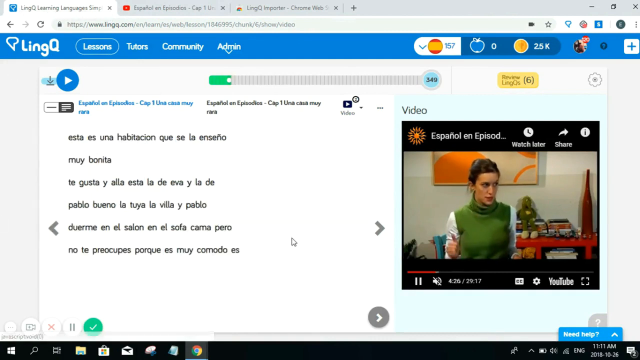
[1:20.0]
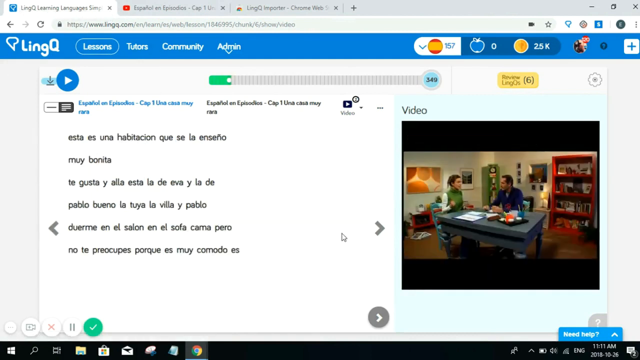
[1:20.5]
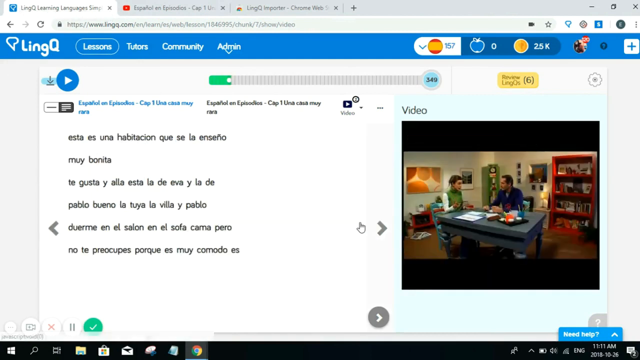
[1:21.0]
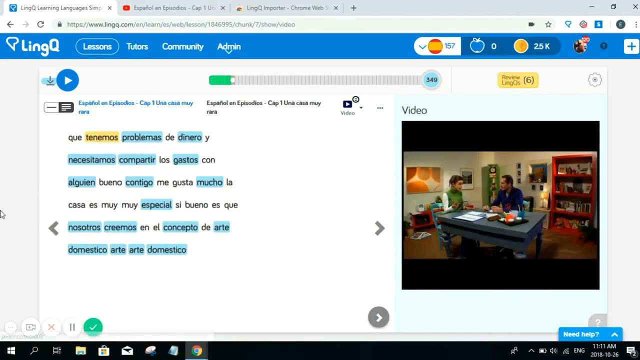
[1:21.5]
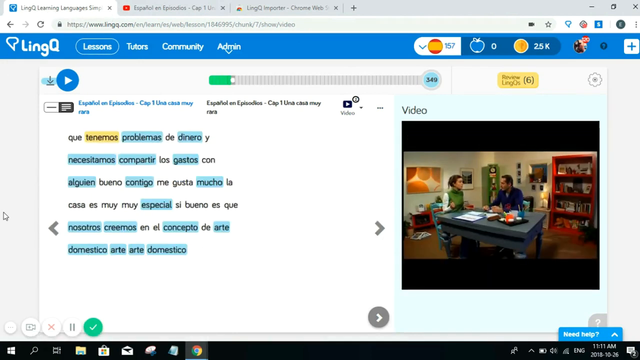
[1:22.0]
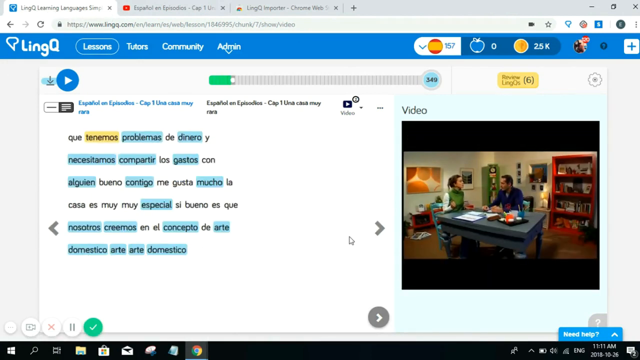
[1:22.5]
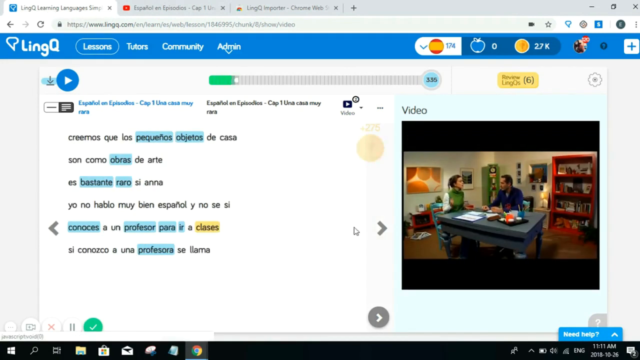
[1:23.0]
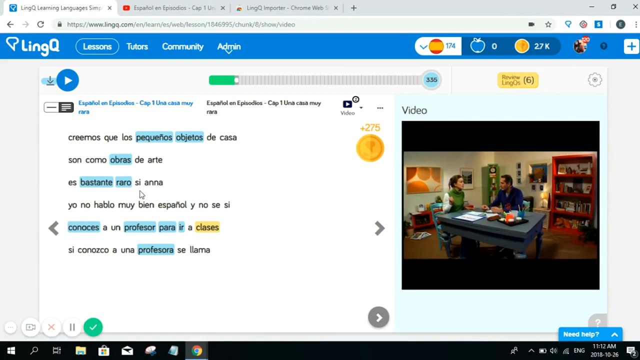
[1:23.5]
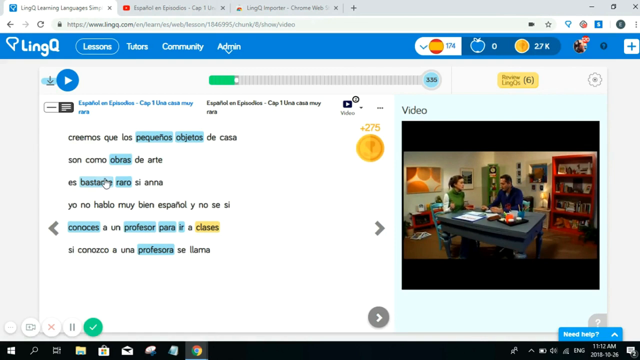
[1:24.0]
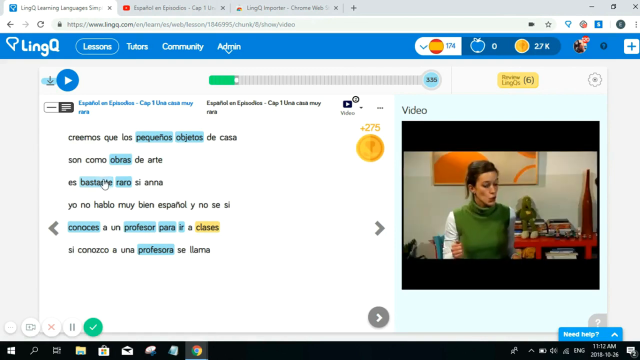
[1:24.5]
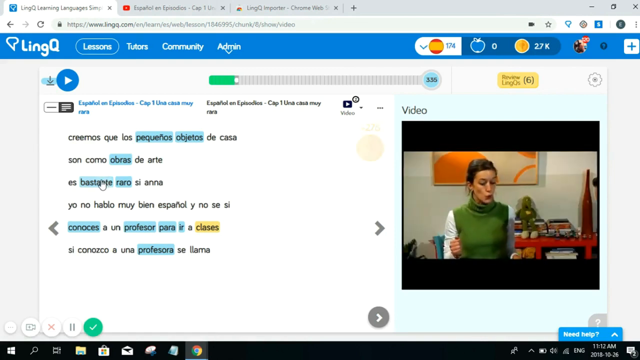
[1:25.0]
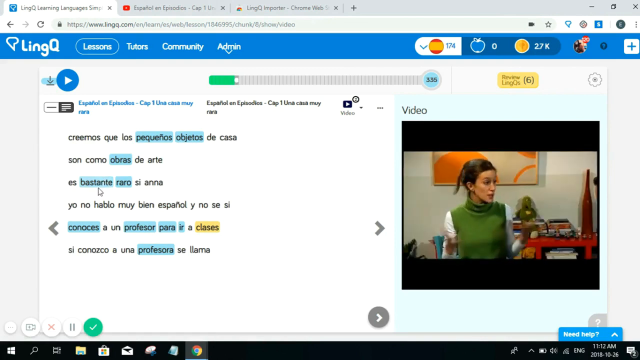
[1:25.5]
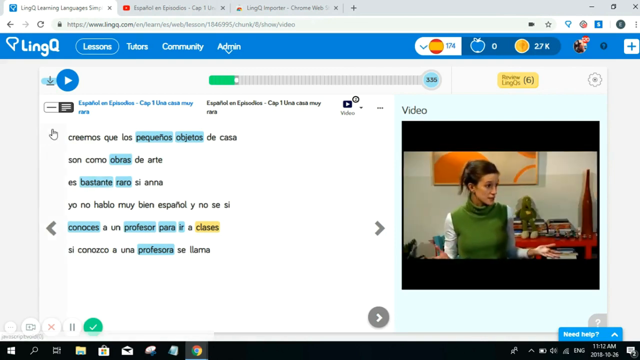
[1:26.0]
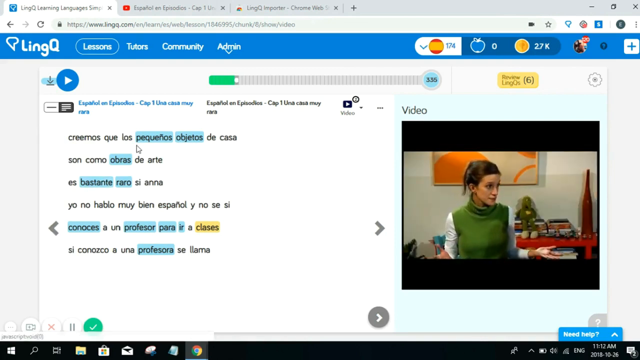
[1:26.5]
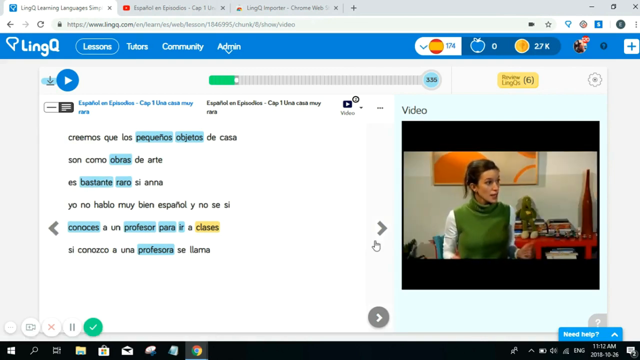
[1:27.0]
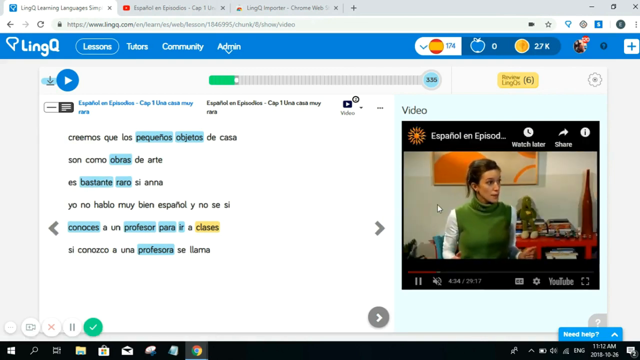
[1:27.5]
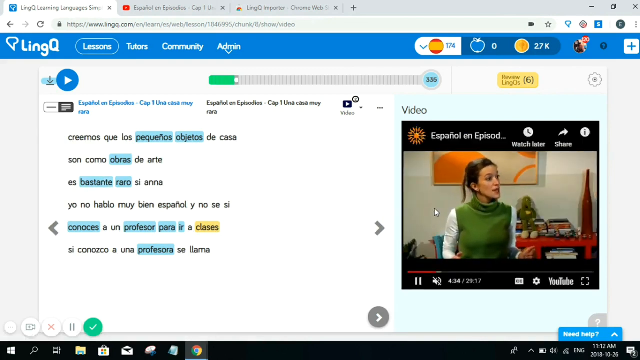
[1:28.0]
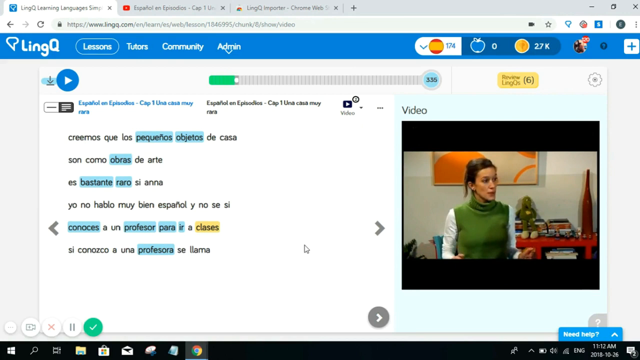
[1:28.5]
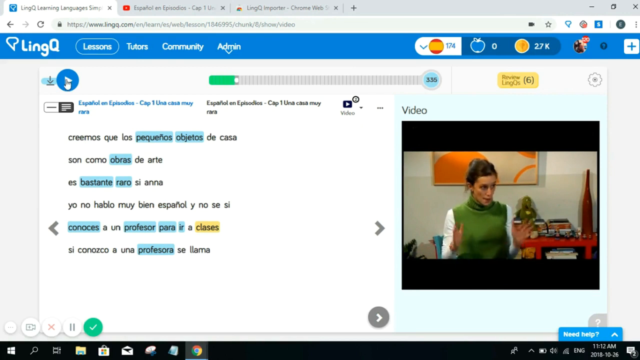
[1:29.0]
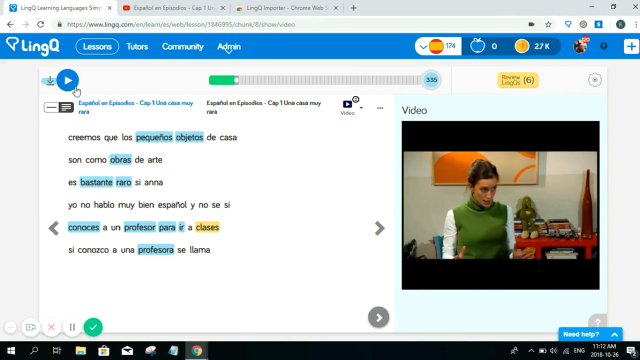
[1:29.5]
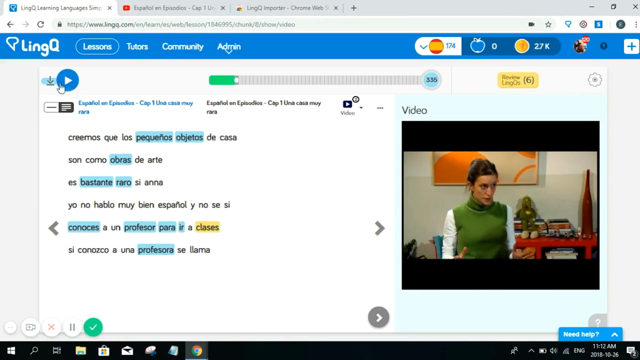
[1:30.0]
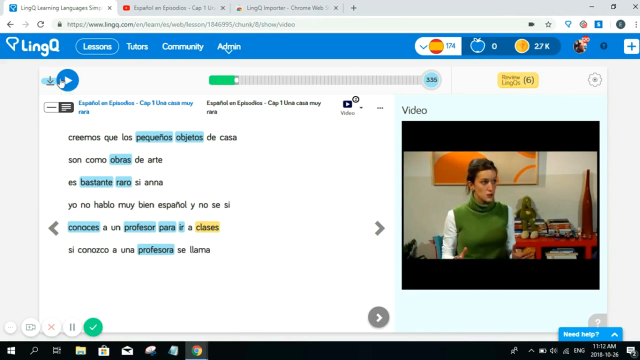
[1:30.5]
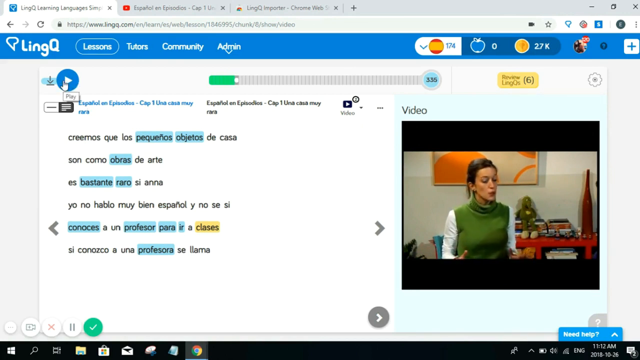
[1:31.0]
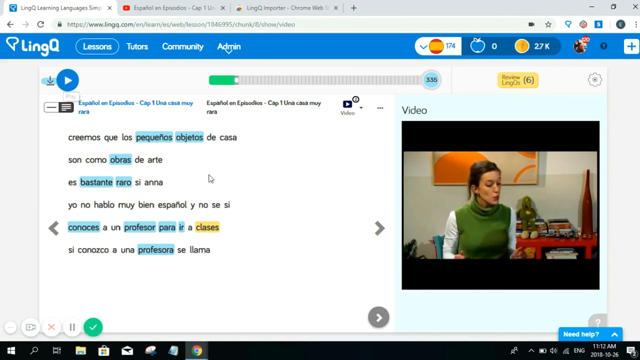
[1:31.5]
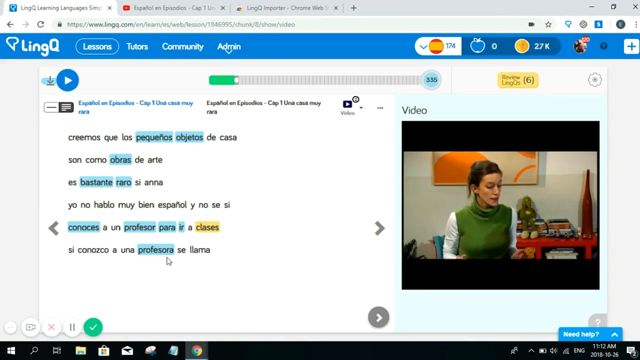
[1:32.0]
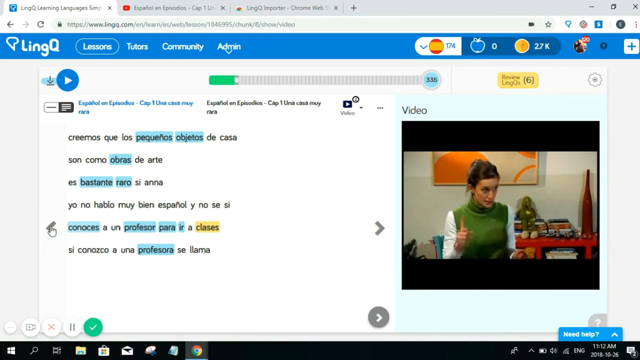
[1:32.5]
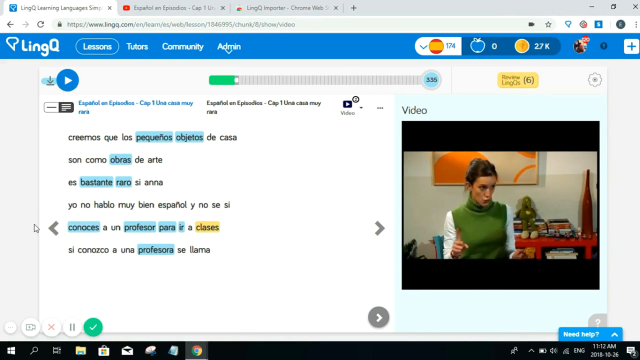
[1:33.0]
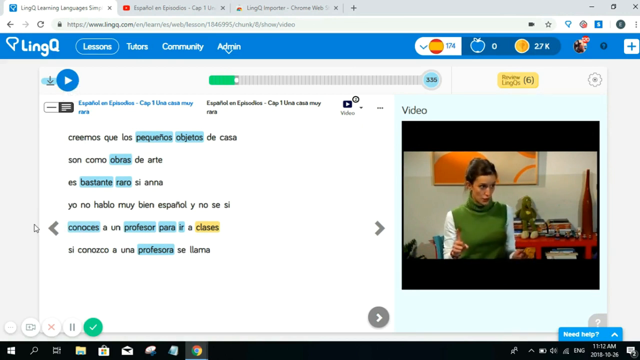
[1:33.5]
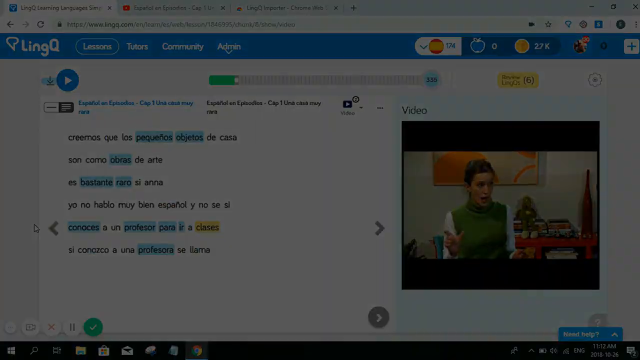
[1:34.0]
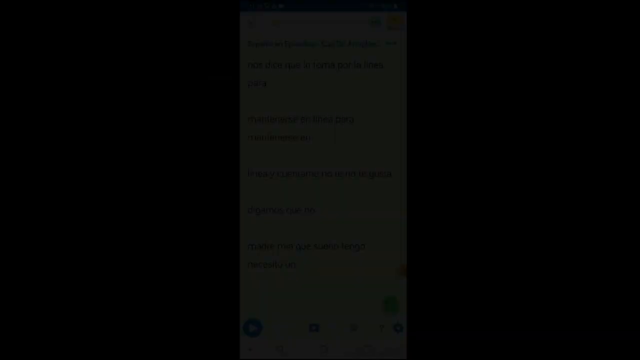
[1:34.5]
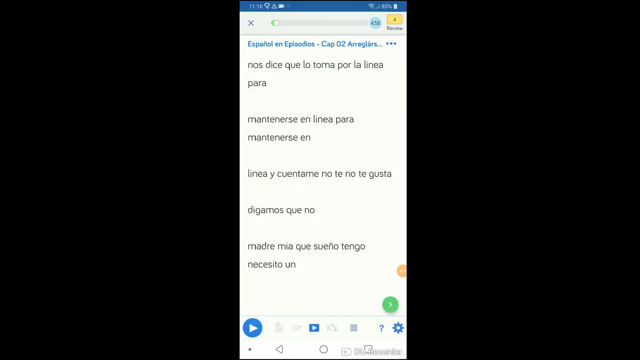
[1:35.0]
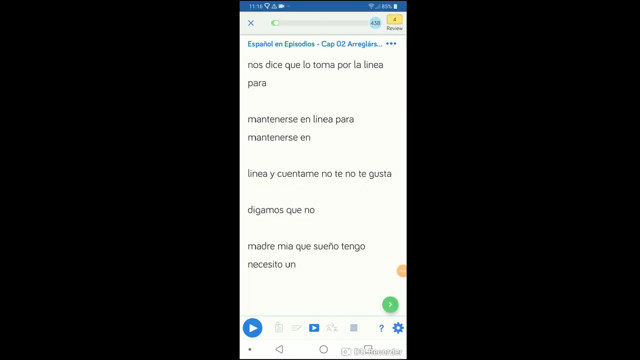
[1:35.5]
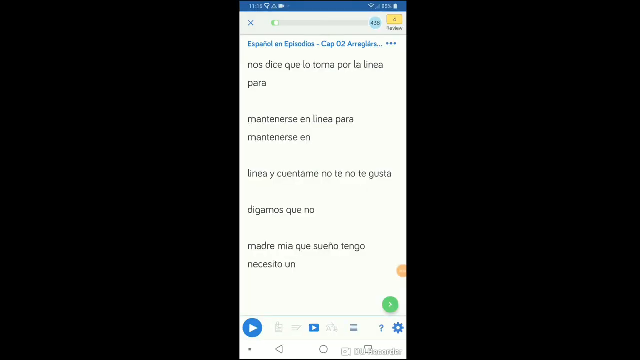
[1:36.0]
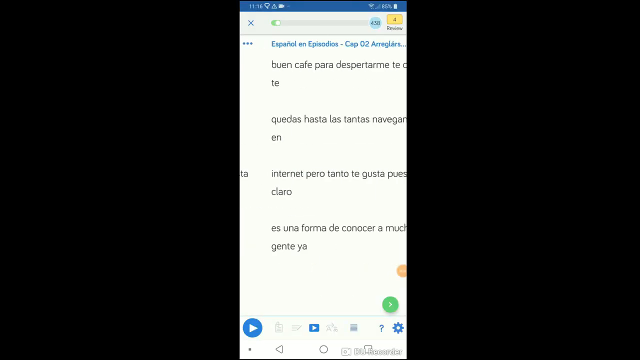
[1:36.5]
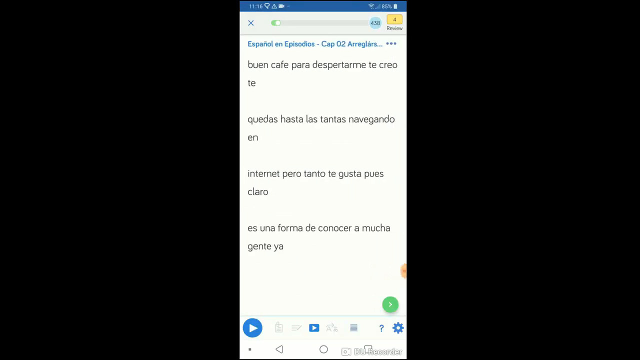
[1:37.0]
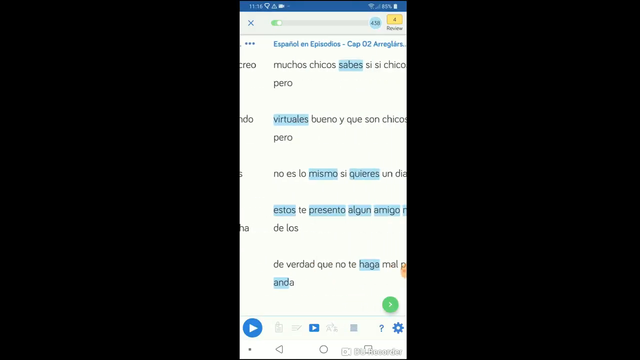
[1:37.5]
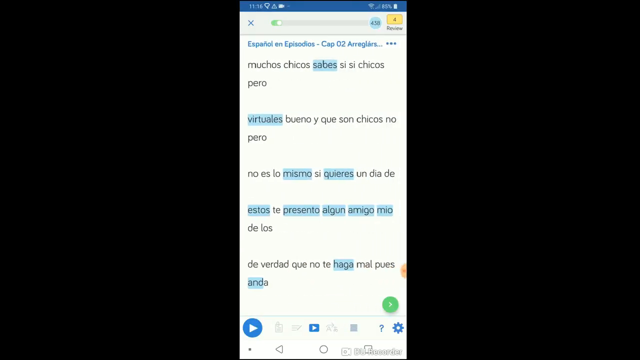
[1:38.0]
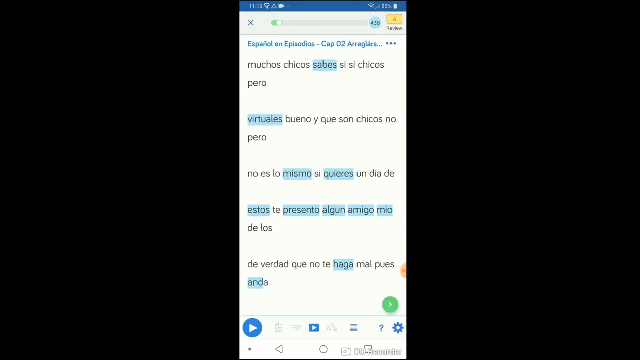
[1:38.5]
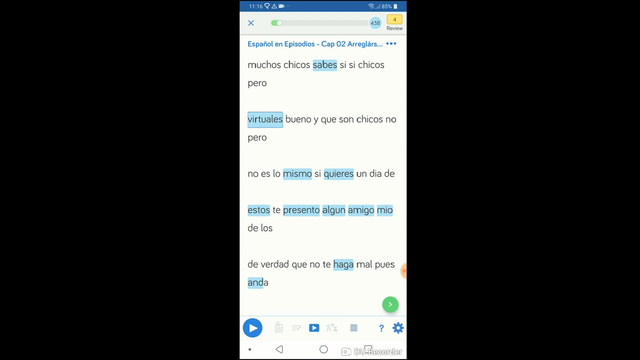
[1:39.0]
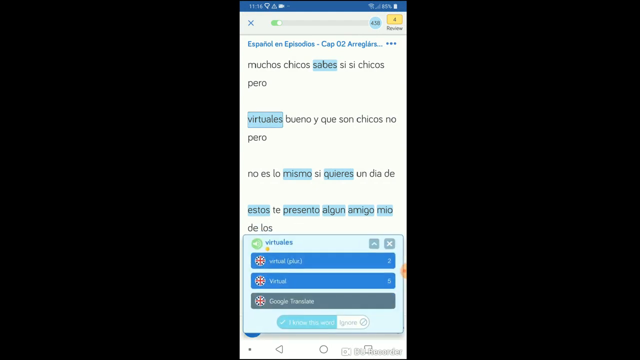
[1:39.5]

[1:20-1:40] On the Lingq page with the picture-in-picture video, apparently the same woman, possibly in a different episode, wears a long-sleeved white shirt with a green turtleneck sweater and talks to apparently the same man in the navy button-up. In the Spanish paragraph, some words are highlighted in blue, and there seems to be one word per page highlighted in yellow. There is an arrow on the left and right sides, apparently for cycling through paragraphs; he clicks the right arrow once and then moves the cursor. A play button is at the top left above the paragraph, and he apparently clicks it. A smaller window pops up with another paragraph in Spanish, again with some words highlighted in blue. He clicks one of the words, and another little window pops up, possibly with a definition.